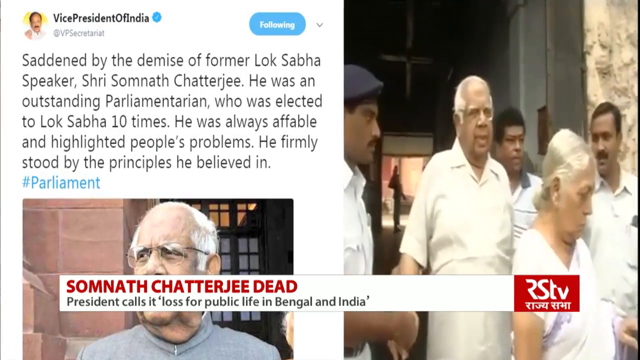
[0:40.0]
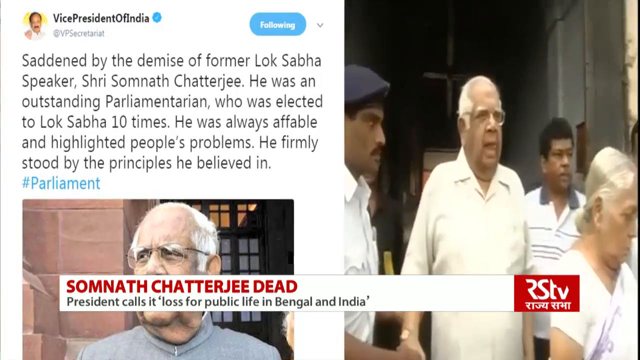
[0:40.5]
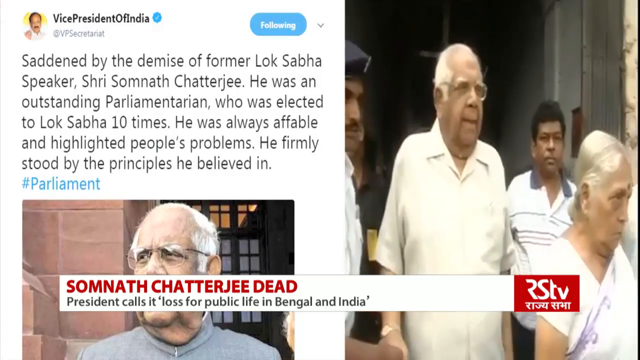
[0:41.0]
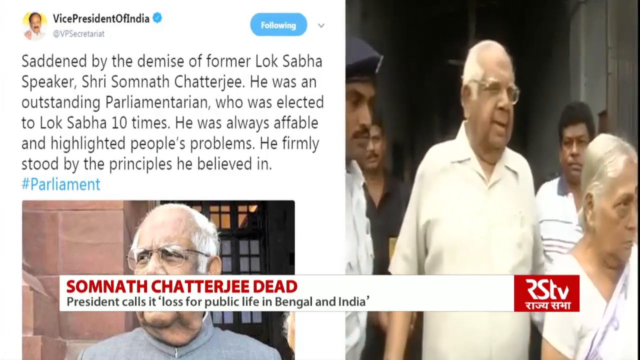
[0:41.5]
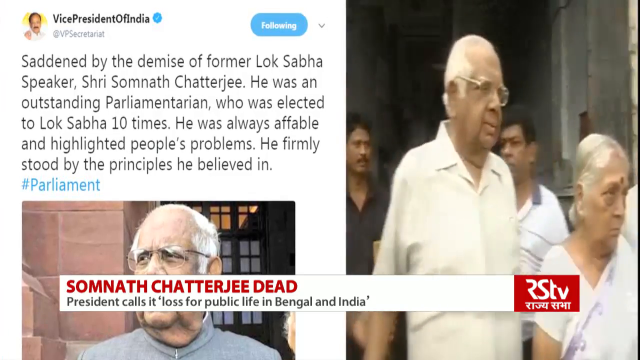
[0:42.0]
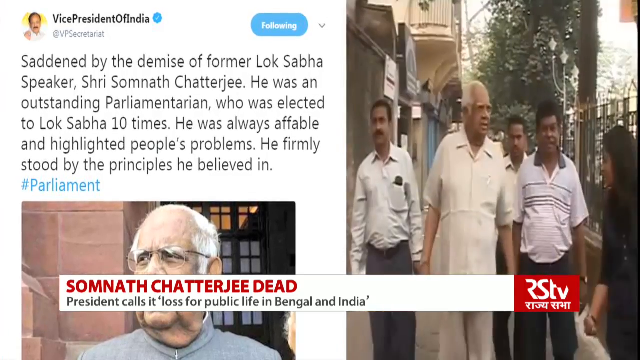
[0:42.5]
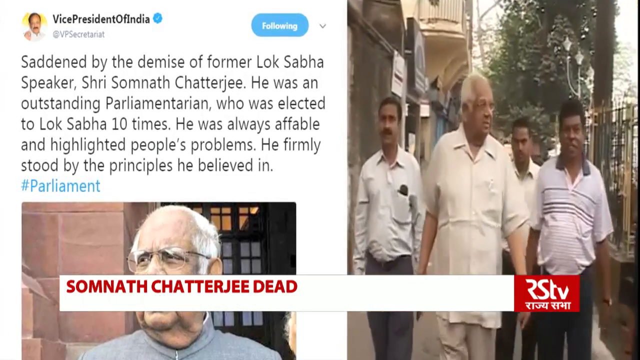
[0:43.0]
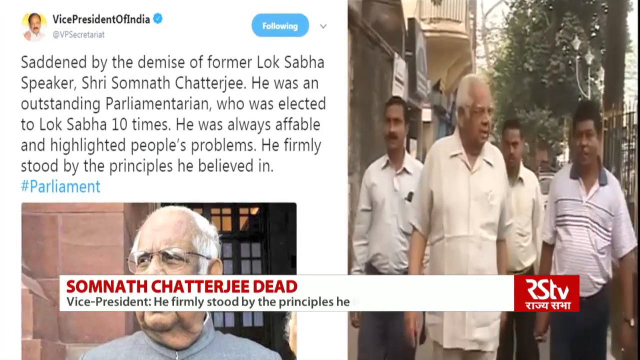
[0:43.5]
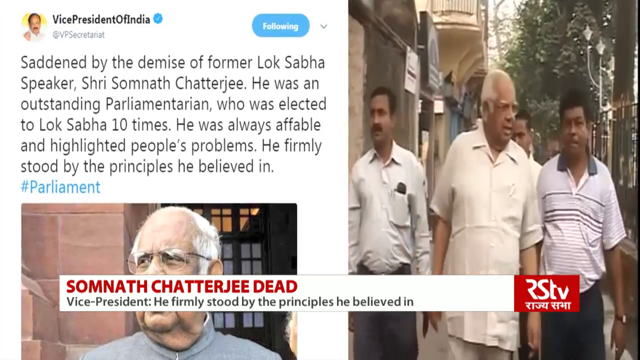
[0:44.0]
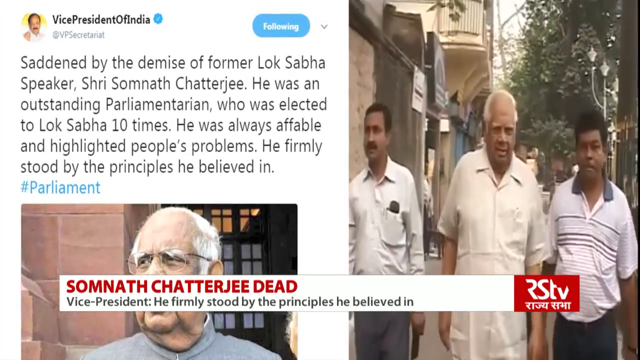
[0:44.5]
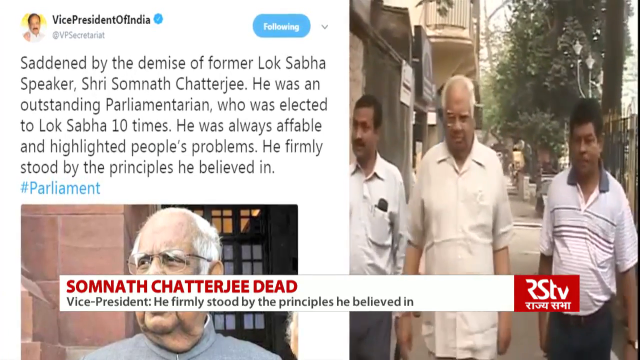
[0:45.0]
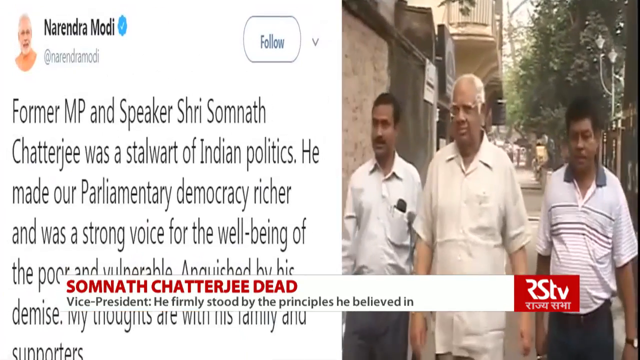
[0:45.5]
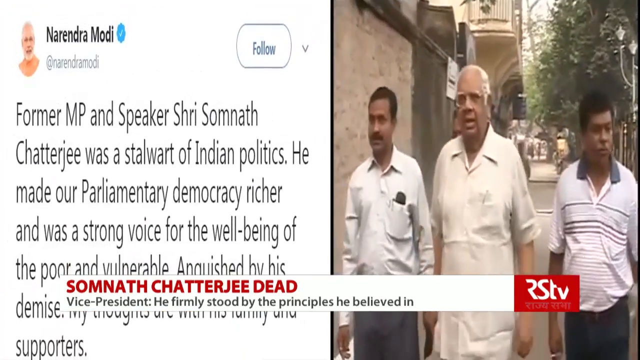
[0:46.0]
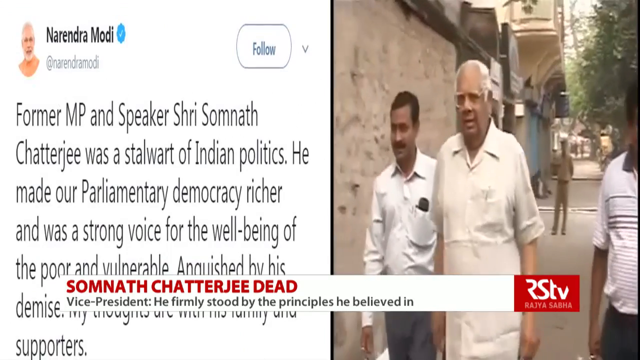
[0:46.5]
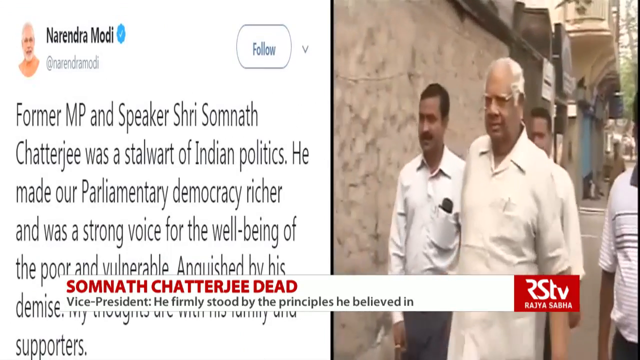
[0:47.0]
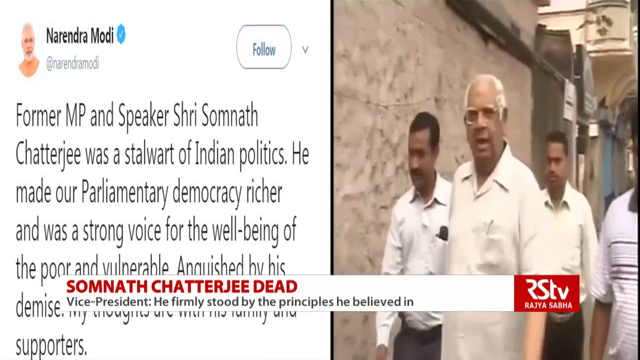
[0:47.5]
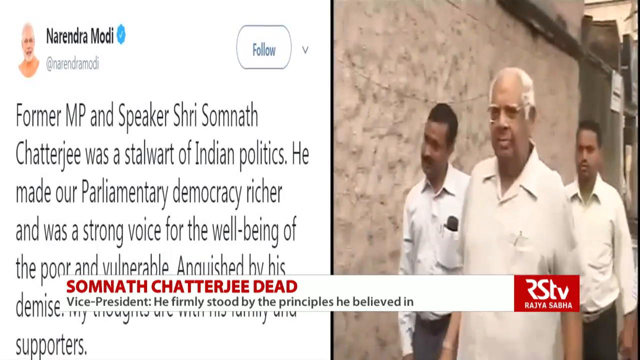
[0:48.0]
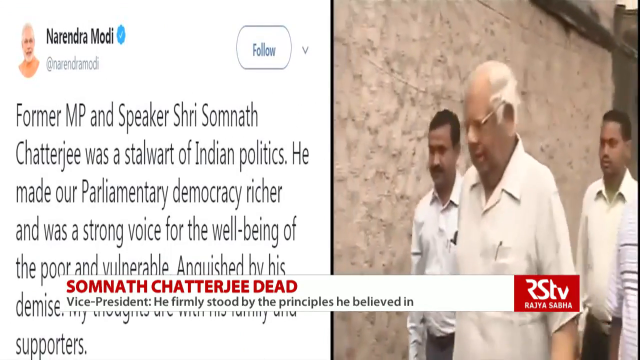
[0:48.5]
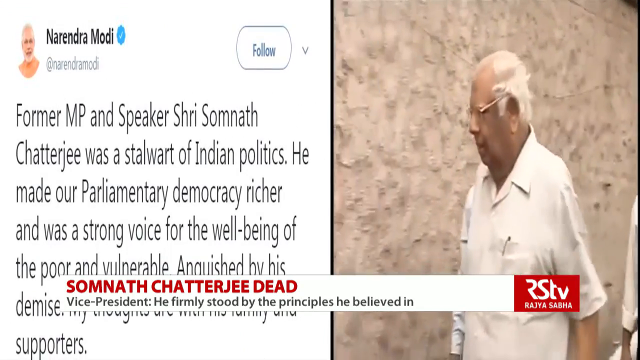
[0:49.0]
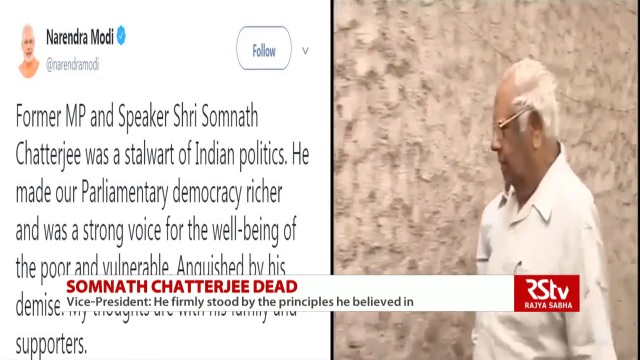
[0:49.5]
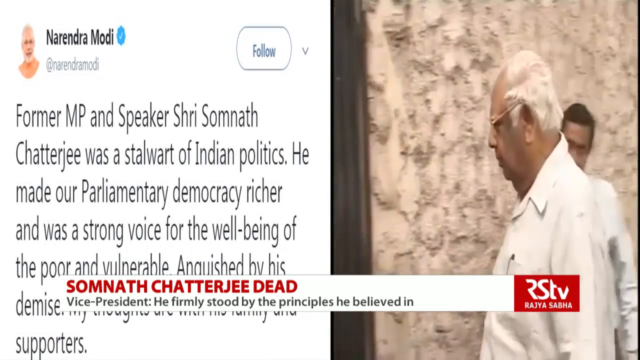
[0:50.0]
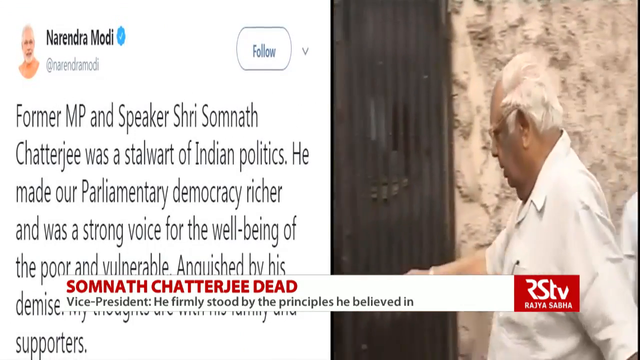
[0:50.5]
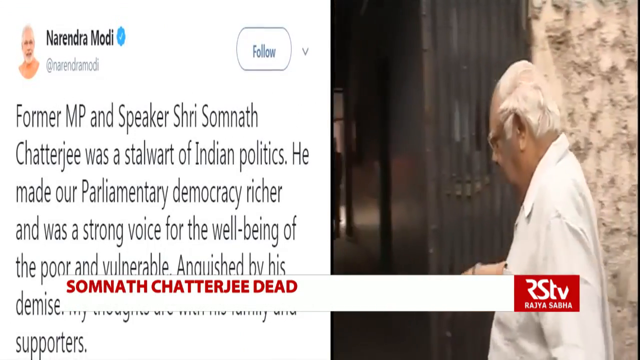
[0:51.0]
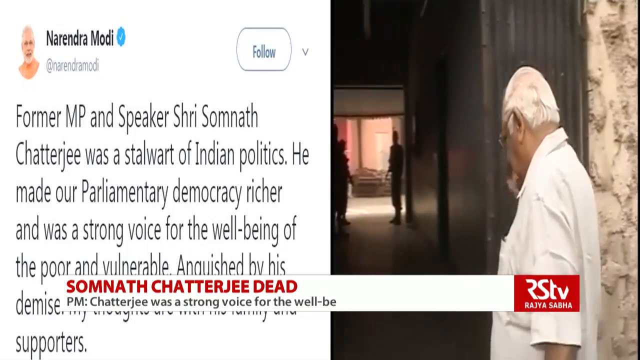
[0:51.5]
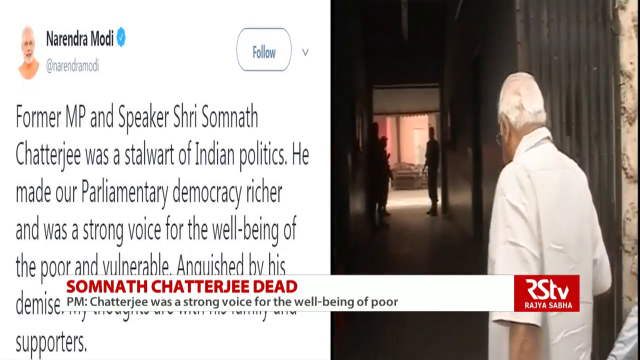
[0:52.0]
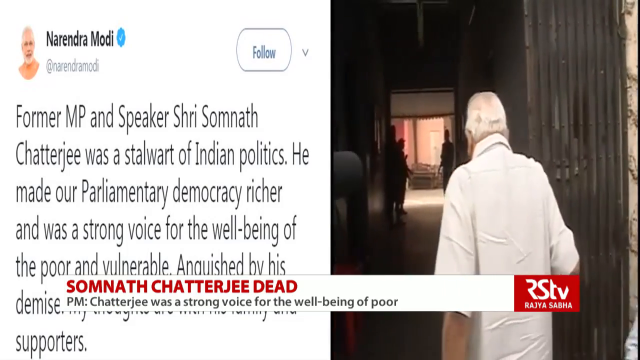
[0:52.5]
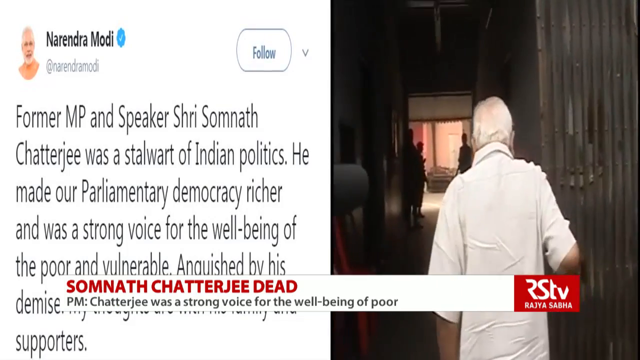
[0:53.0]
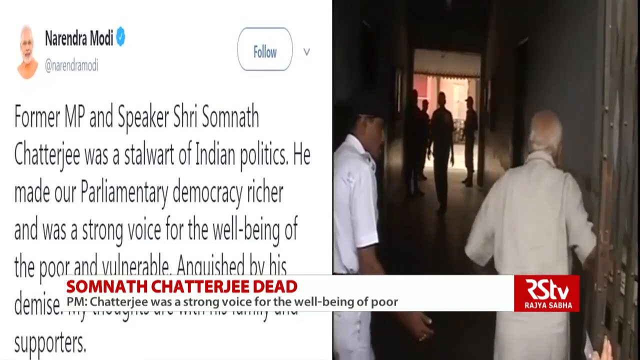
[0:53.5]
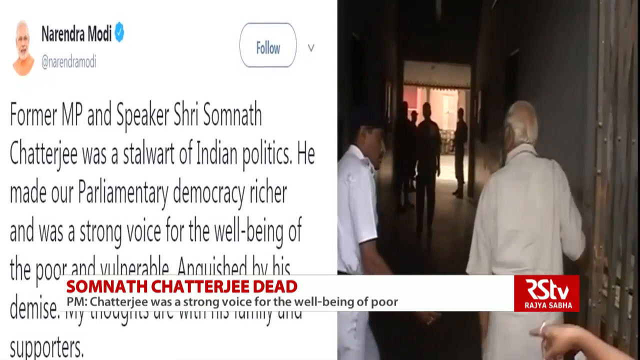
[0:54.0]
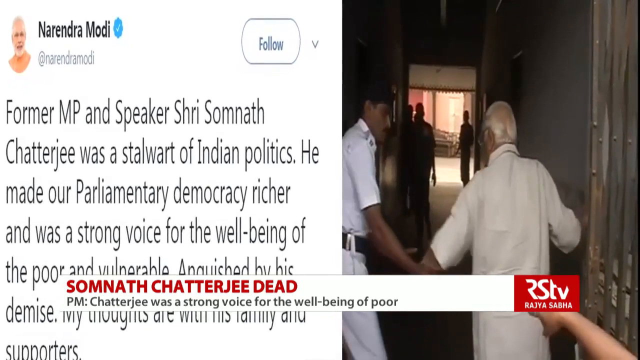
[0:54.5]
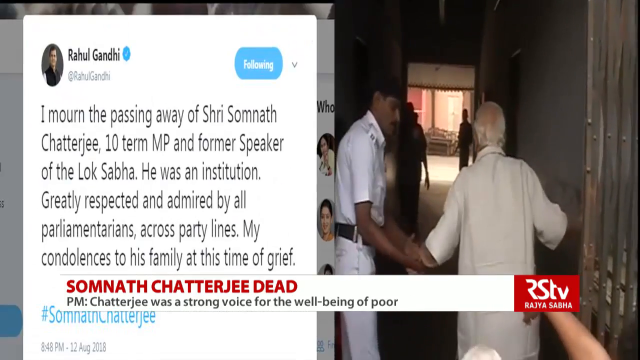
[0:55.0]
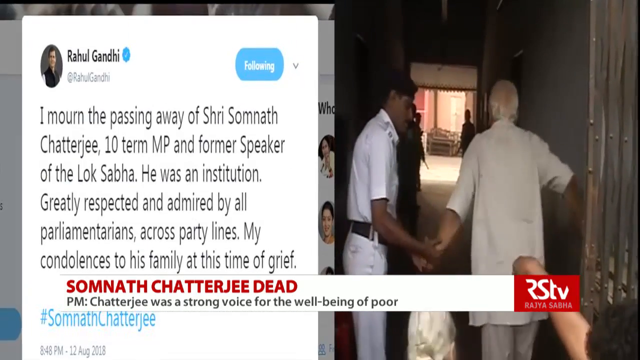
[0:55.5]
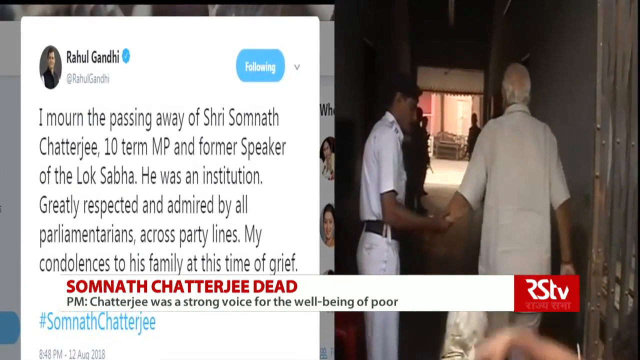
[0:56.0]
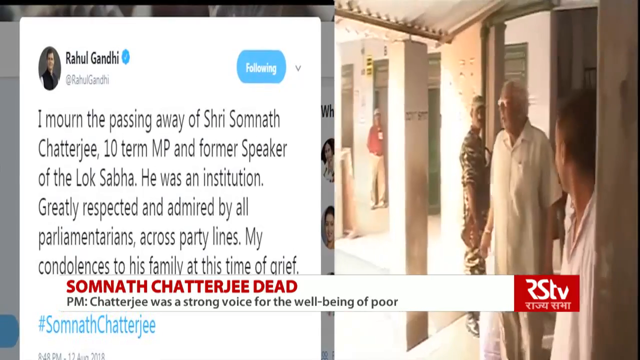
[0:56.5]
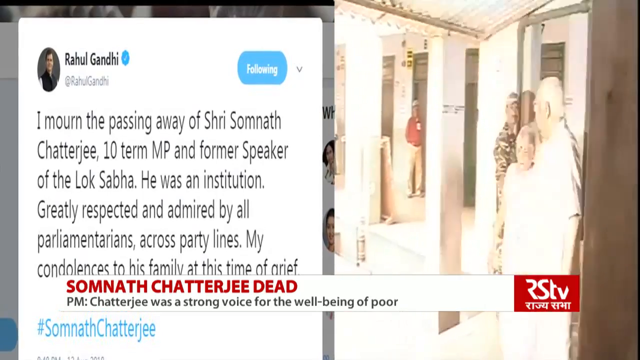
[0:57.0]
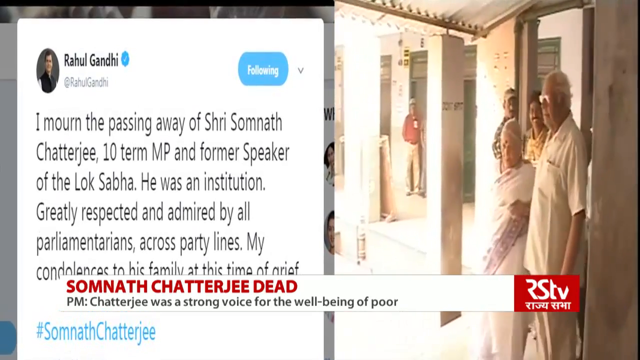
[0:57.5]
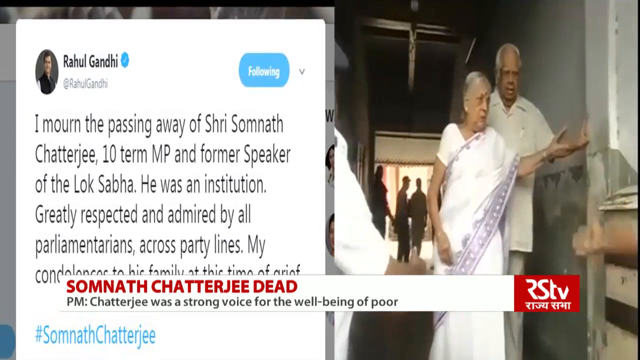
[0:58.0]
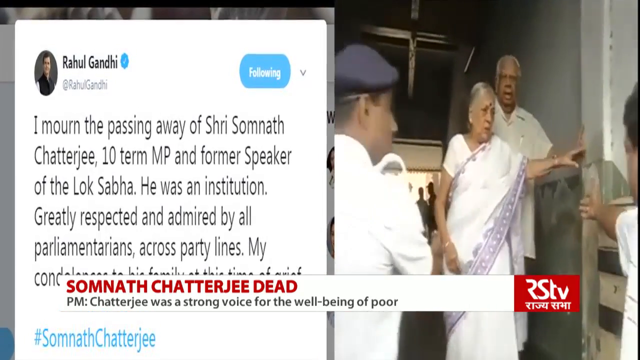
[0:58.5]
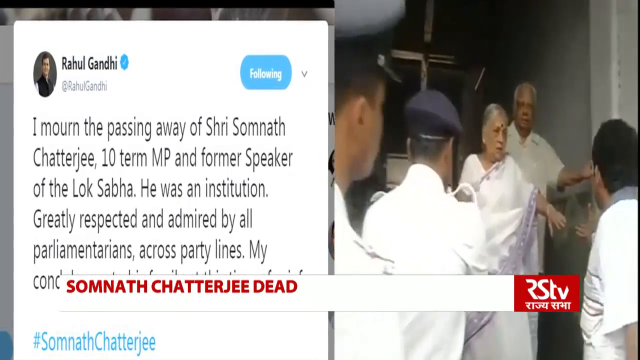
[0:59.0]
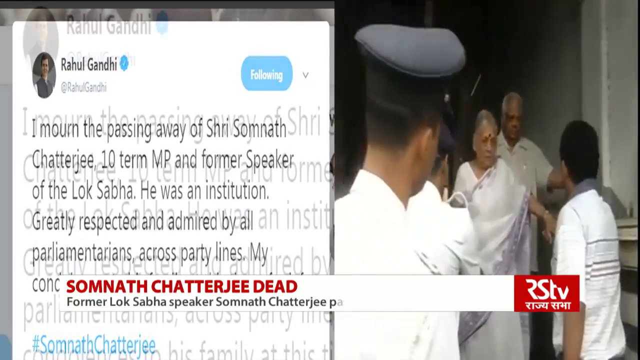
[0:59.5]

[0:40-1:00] A tweet on the left side of the screen is labeled "Vice President of India" and says "saddened by the demise of former Lok Sabha speaker Shri Samnath Chatterjee. He was an outstanding parliamentarian who was elected to Lok Sabha 10 times. He was always affable and highlighted people's problems. He firmly stood by the principles he's believed in. #parliament." At the bottom of the tweet is a picture of the man who died. On the right side, a video shows the man who died walking among other people outside a door; he wears glasses and looks elderly. The bottom of the screen says "Samnath Chatterjee dead" and "Vice President he firmly stood by the principles he's believed in." Another tweet then appears on the left side, from Narendra Modi: "Former MP and speaker Shri Samnath Chatterjee was the stalwart of Indian politics."